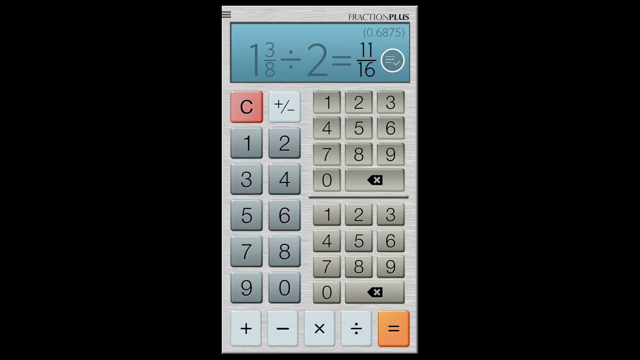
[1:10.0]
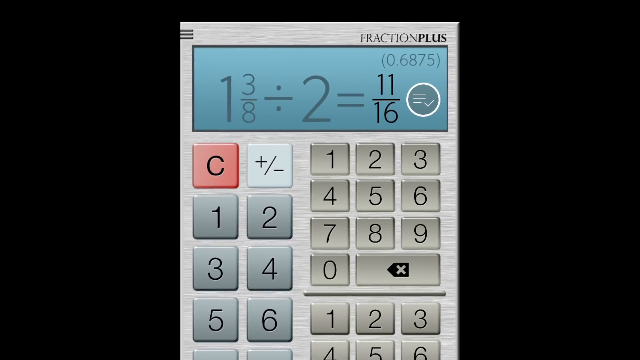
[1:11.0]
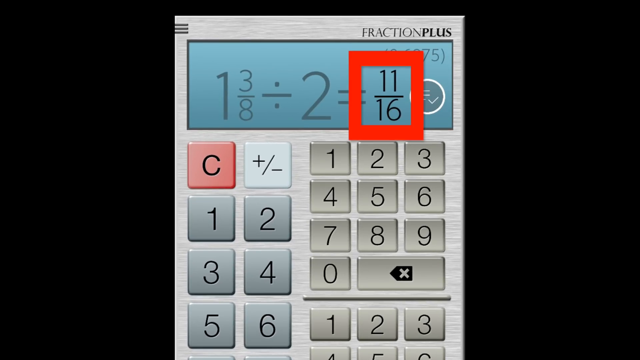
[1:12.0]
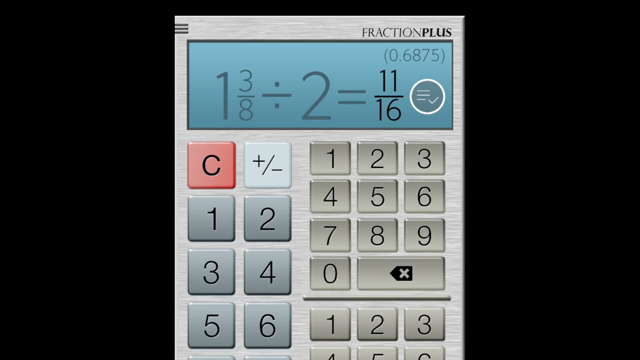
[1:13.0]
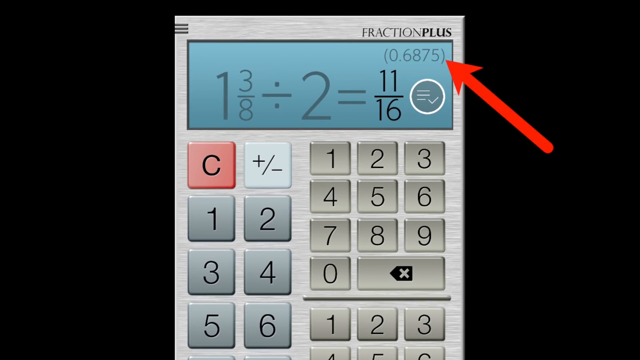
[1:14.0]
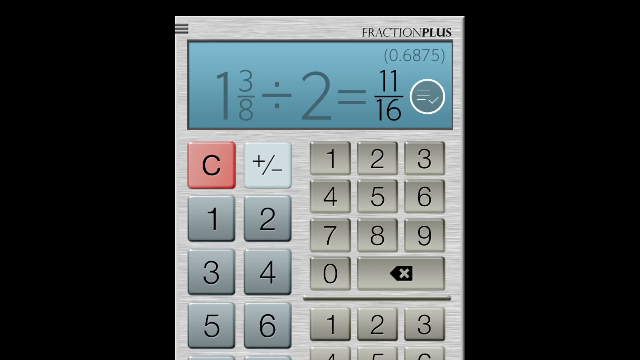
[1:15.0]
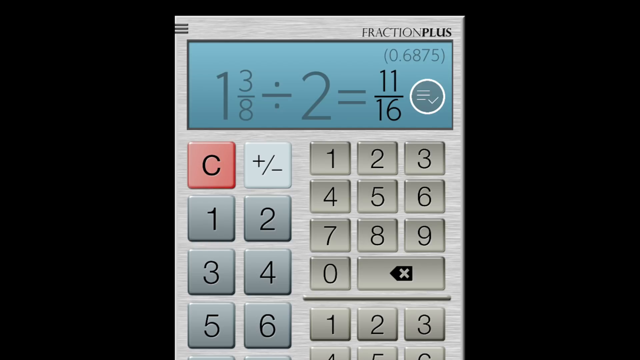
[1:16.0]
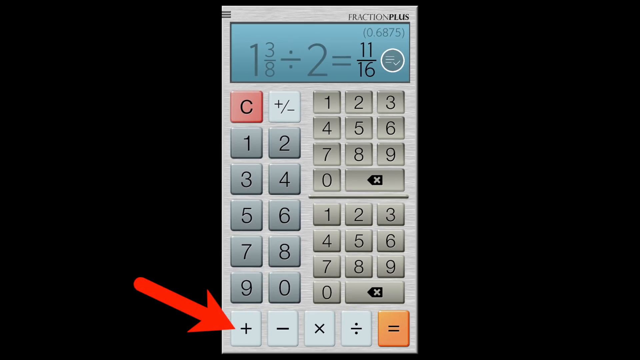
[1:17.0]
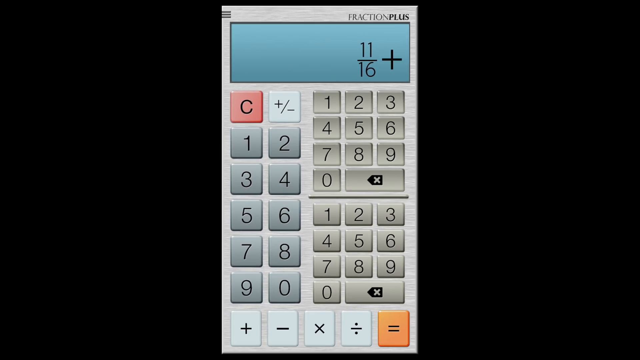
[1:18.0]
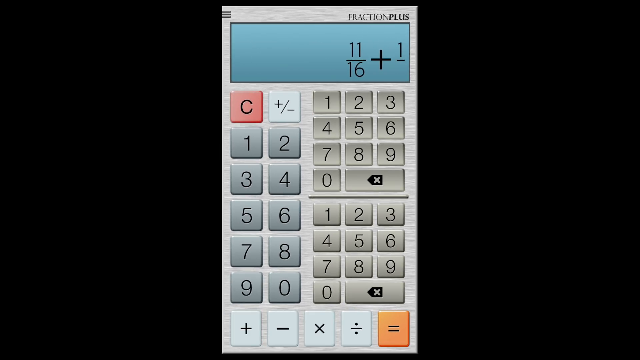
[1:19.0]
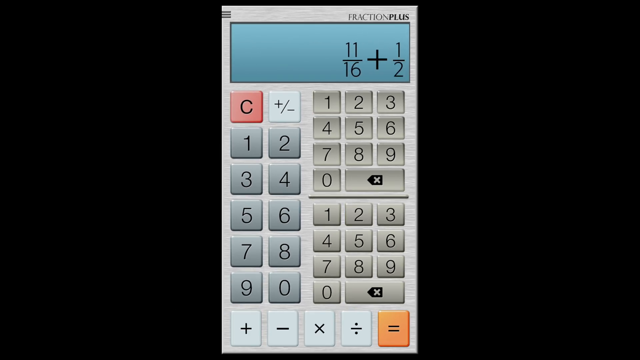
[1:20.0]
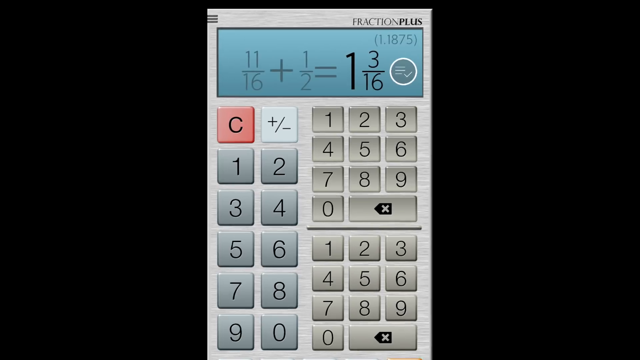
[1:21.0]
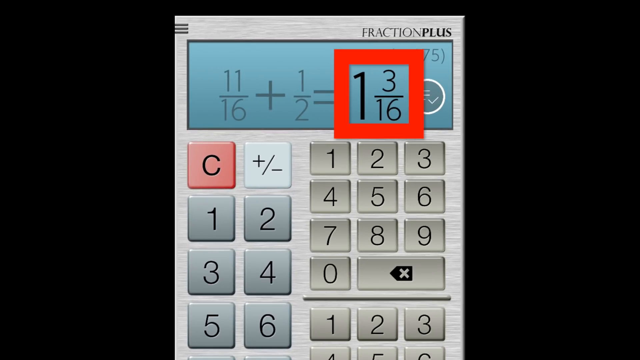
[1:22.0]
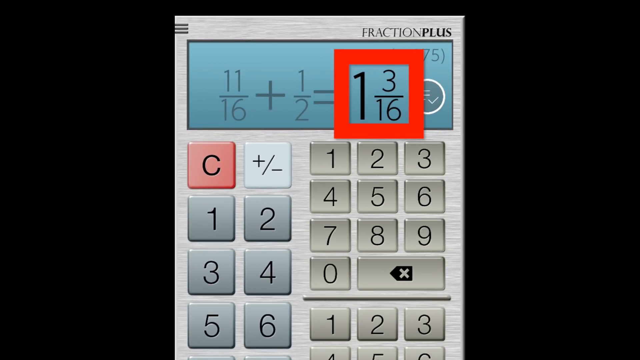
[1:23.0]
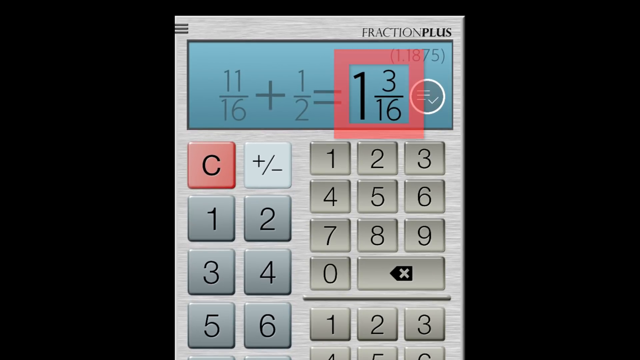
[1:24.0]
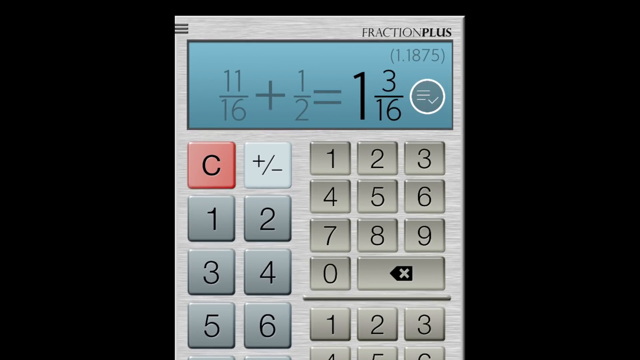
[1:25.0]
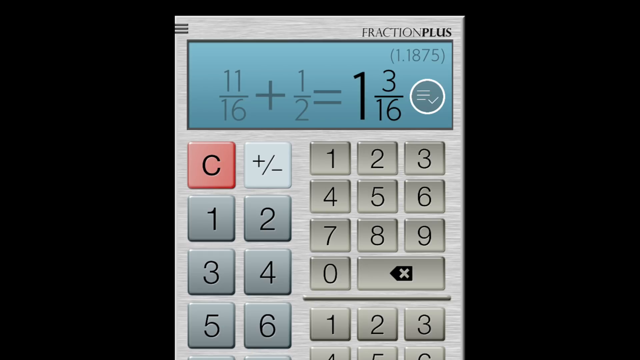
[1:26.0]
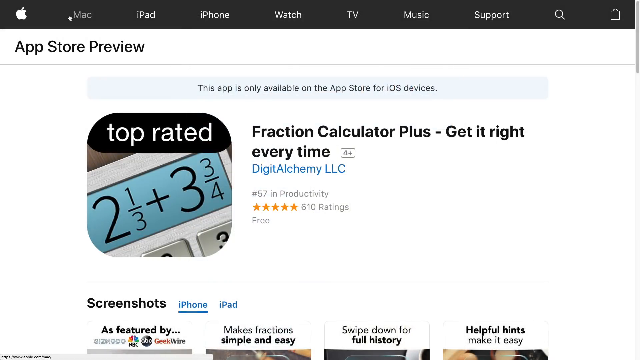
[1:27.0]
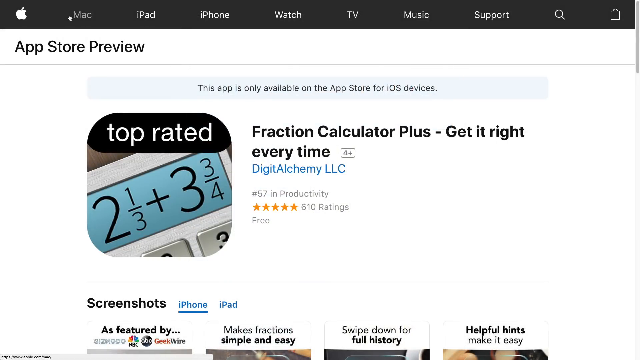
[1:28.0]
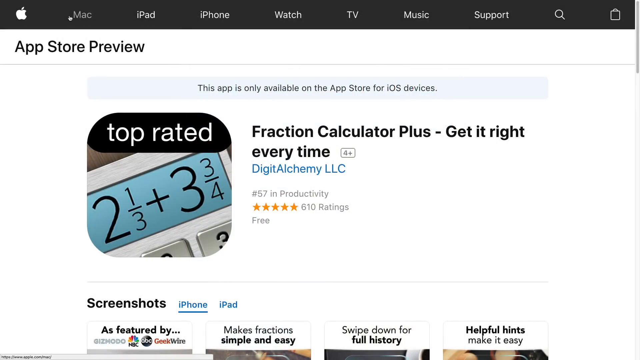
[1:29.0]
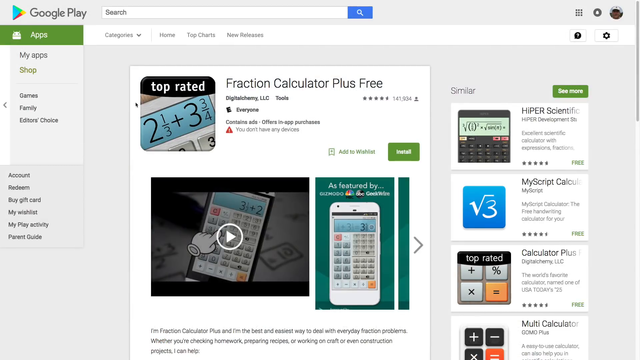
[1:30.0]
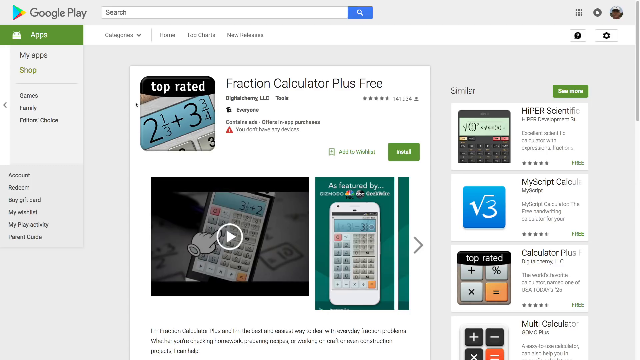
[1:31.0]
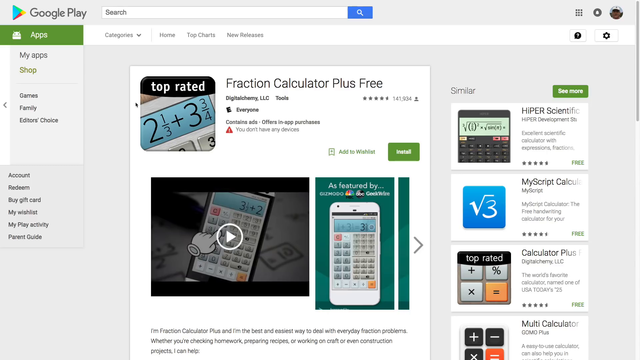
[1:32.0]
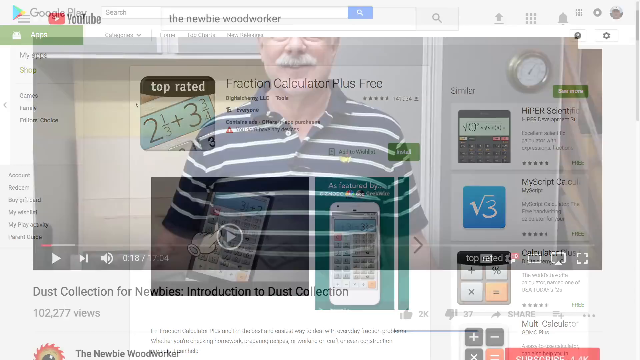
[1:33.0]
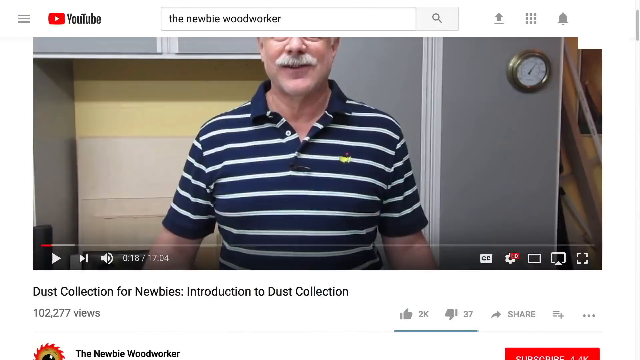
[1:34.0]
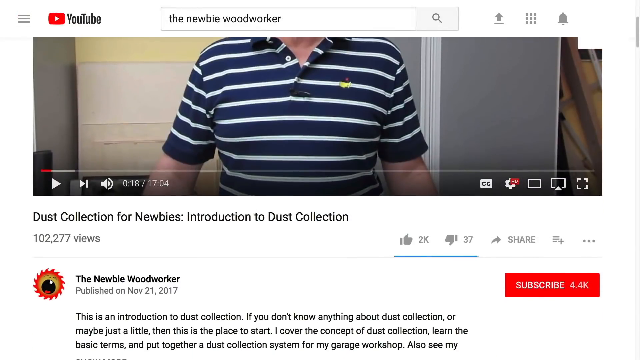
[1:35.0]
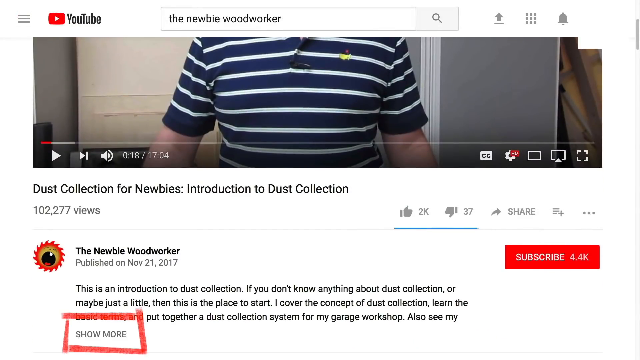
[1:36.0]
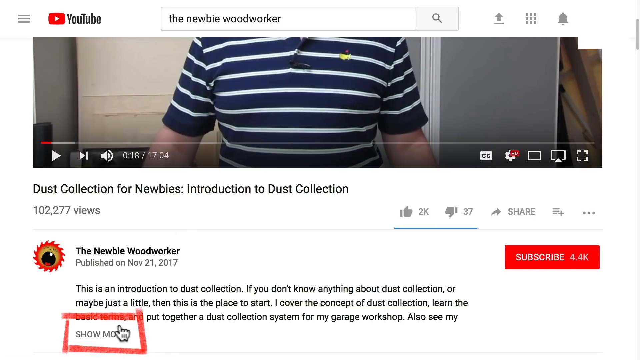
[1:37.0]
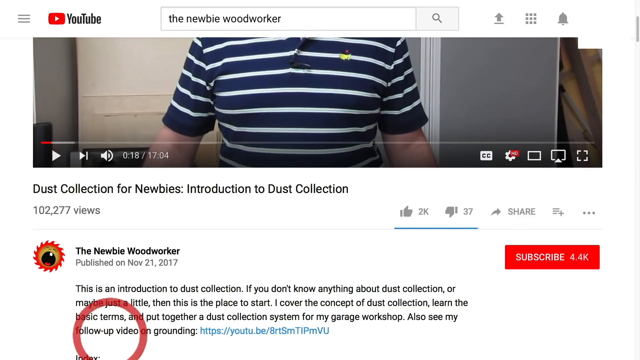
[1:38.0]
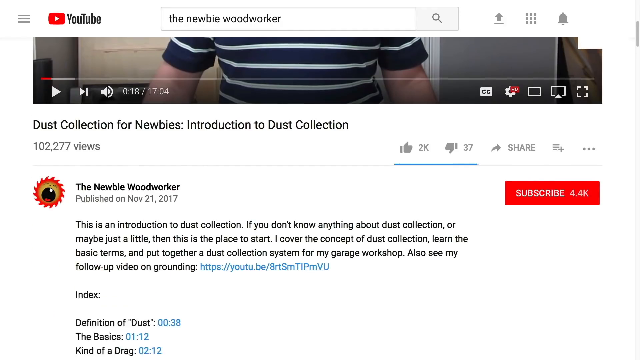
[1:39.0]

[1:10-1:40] The black screen with the centered calculator remains. It shows 1 and 3/8 divided by 2 equals 11/16, and in the upper right corner of the calculator it reads ".6875". The camera zooms in and a red box appears around 11/16. The red box disappears and the red arrow points to the .6875 in the upper corner, then at the addition key, then at the 2 for the half. The answer, one and three sixteenths, appears in a red square at the top of the calculator. The calculator then disappears and an App Store Preview page screenshot appears with the top-rated Fraction Calculator Plus Get It Right logo. The screen changes to the demonstration of the top-rated app. A man in a blue and white striped collared shirt appears on the screen, and below his YouTube clip it reads "Dust Collection for Newbies, Introduction to Dust Collection." The screen scrolls and a red box appears around "Show More." The arrow is under "Newbie woodworker" and then moves to "Show More" to click on it, after which the screen scrolls.